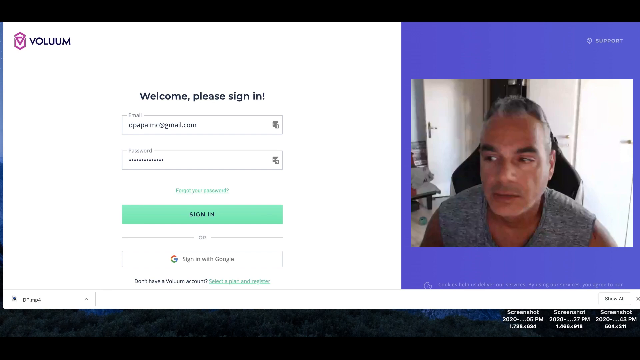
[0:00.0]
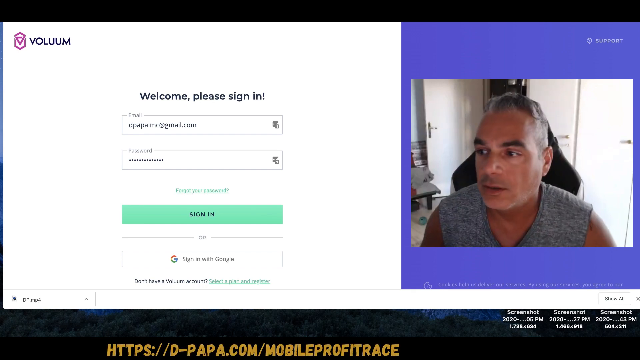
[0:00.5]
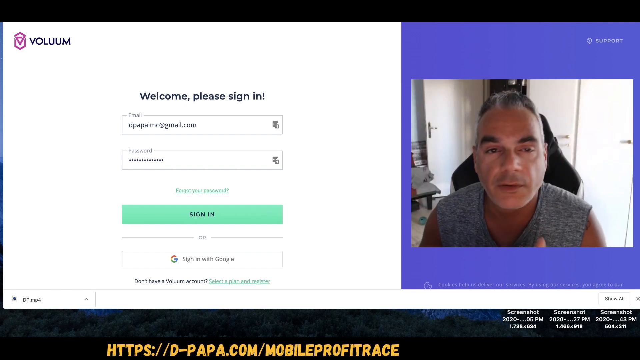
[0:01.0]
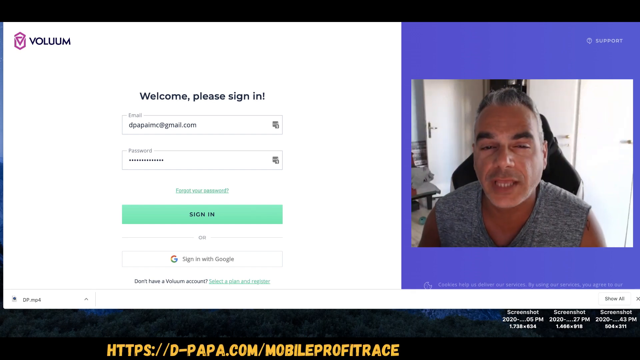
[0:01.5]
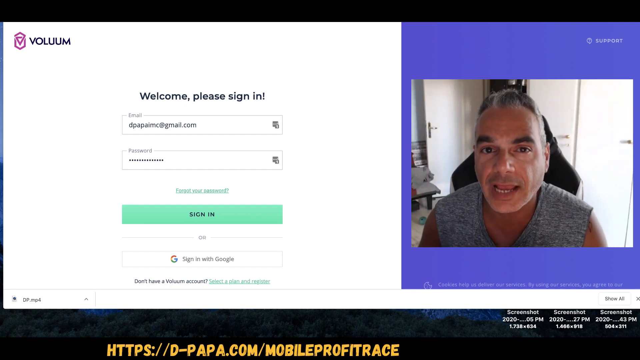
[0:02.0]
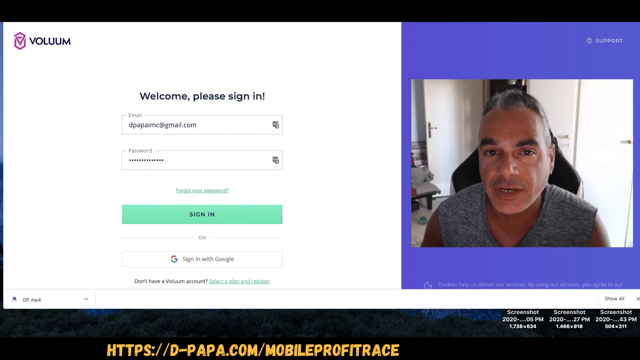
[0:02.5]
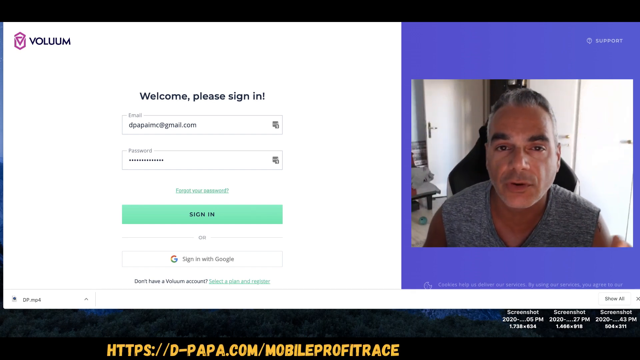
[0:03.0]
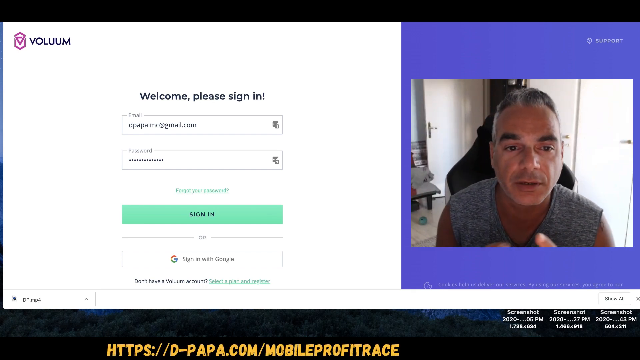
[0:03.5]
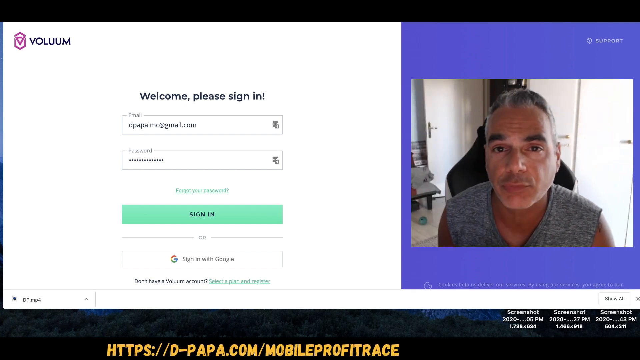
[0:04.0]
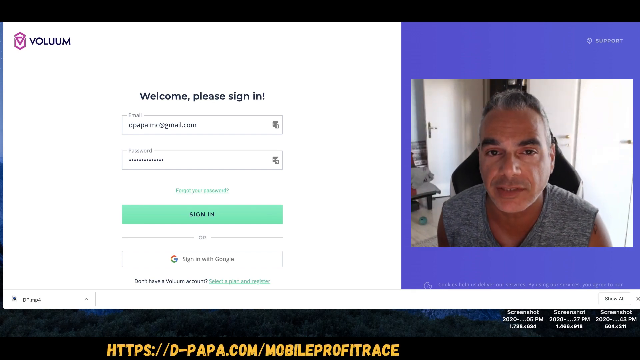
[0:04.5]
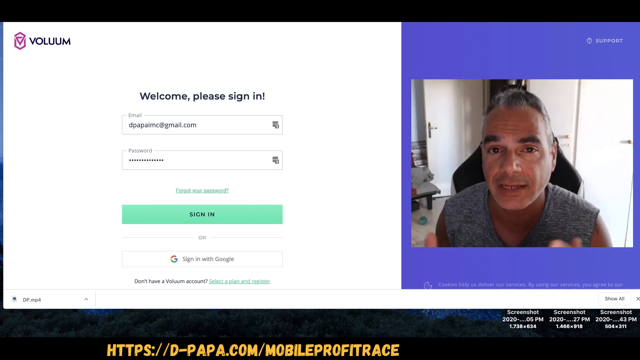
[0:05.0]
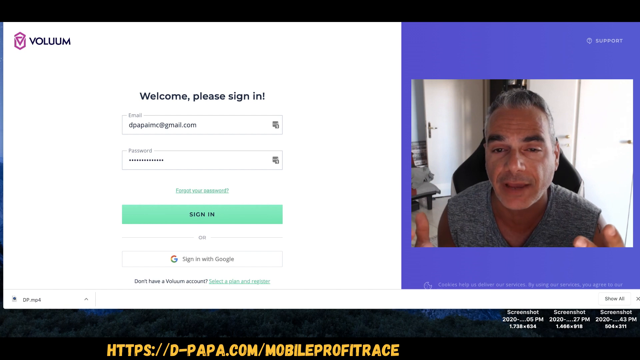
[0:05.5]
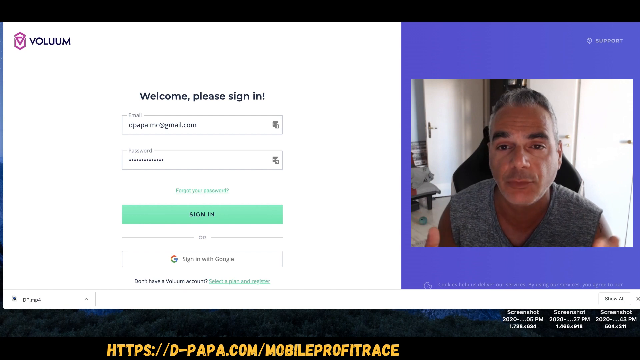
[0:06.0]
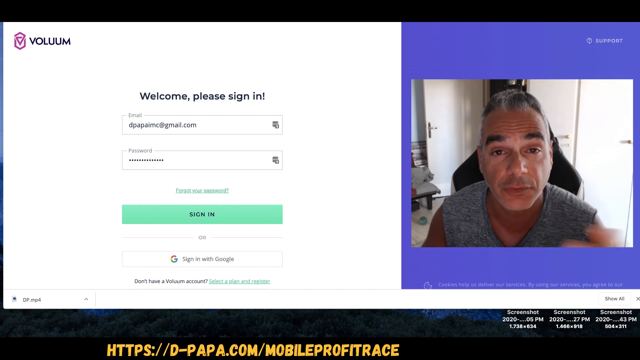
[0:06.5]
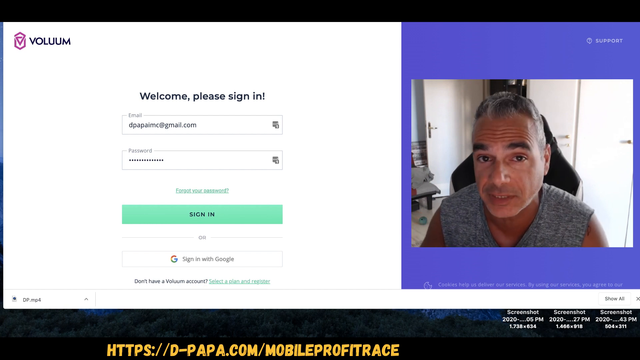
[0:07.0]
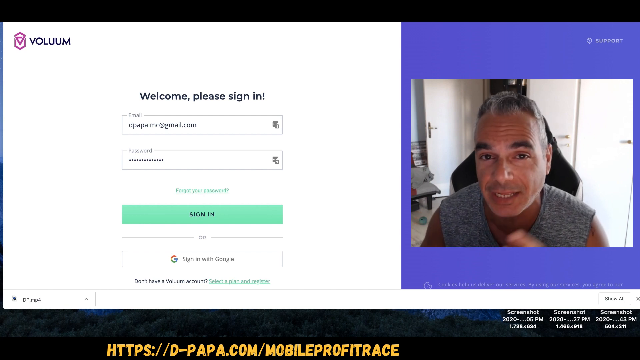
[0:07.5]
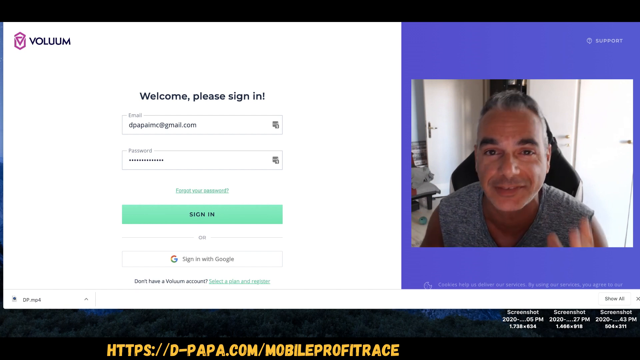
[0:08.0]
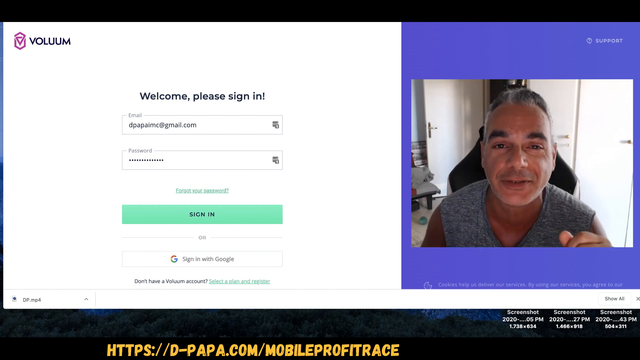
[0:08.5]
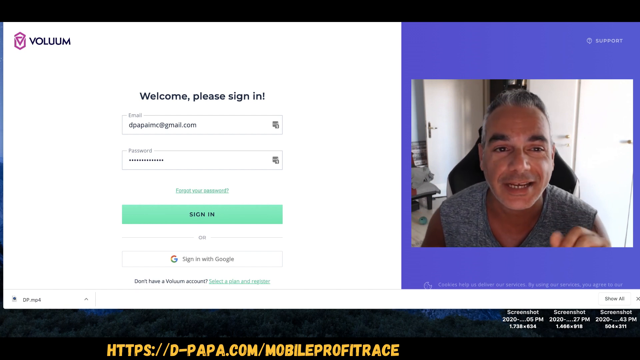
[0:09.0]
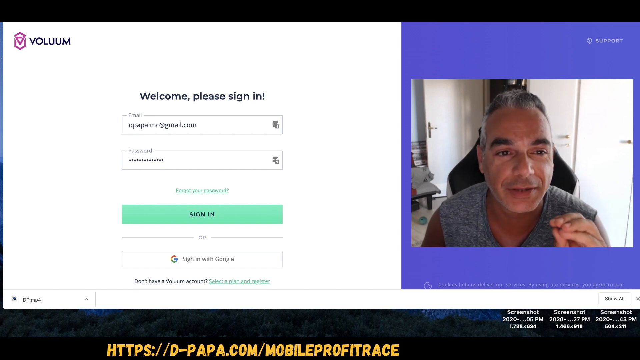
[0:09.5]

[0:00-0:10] The screen is split, with a live video camera feed of a man on the right-hand side. He is sitting in a room with some white doors behind him. He wears a gray vest t-shirt, has quite a tan and very short gray hair, and a purplish-blue box surrounds his video. On the left-hand side is part of a computer screen showing the sign-in/log-in screen of a company or software called Volume. In the top left-hand corner is a small logo shaped like a kite and what may be a coat of arms, overlapping each other. In the center, black text reads "welcome, please sign in". Below it is an email input field containing the address "DPAPALMC@gmail.com", and below that a password field with an entered password obscured by tiny stars. Underneath is an underlined "forget your password" link in a very light green, then a green sign-in call-to-action button, the word "or", and another call-to-action button to sign in with Google. The man talks into the camera, using his hands; his fingers appear in the bottom corners of the screen as he stretches them out, then he pulls them back off the screen. He raises his left hand, pointing his fingers up in the air, then puts all his fingertips together and places his hand against his chest. His left hand appears in the bottom right-hand corner again, he puts his fingertips together, and then spreads his hands out again.